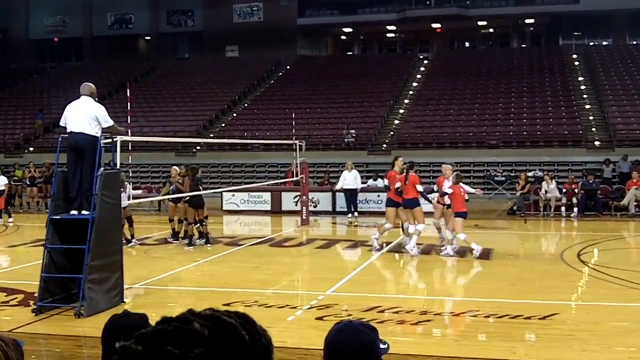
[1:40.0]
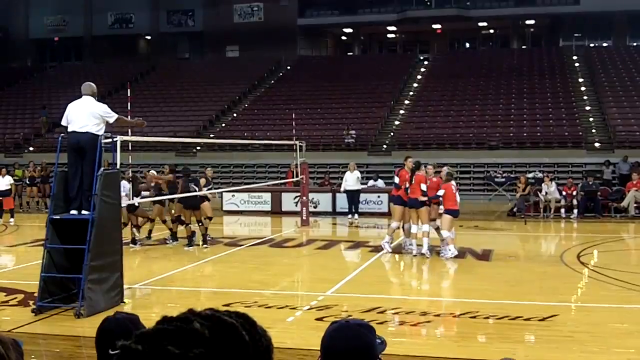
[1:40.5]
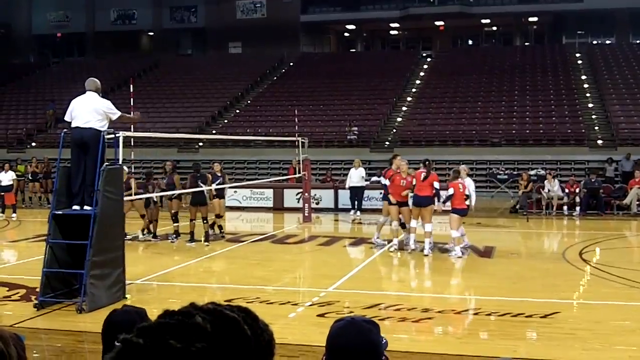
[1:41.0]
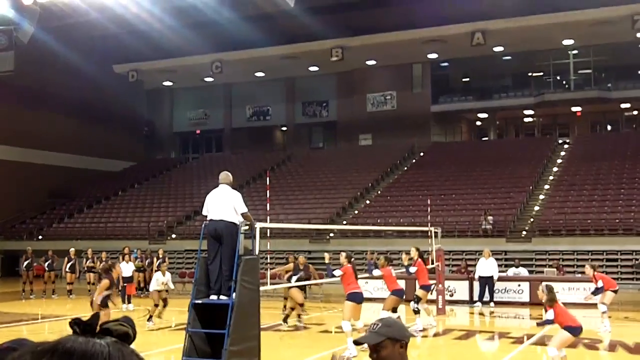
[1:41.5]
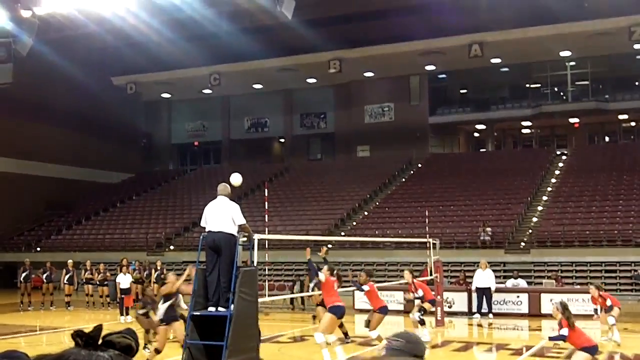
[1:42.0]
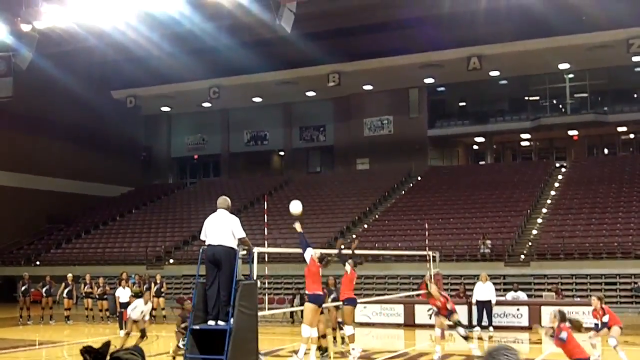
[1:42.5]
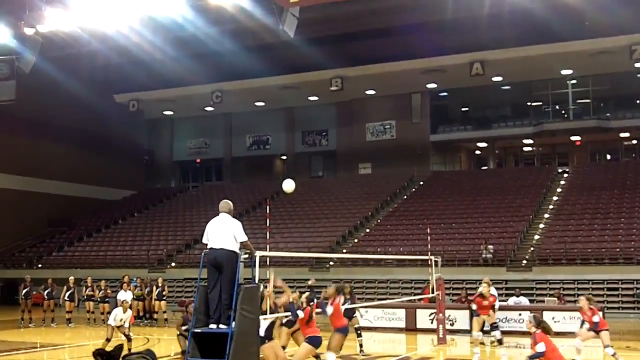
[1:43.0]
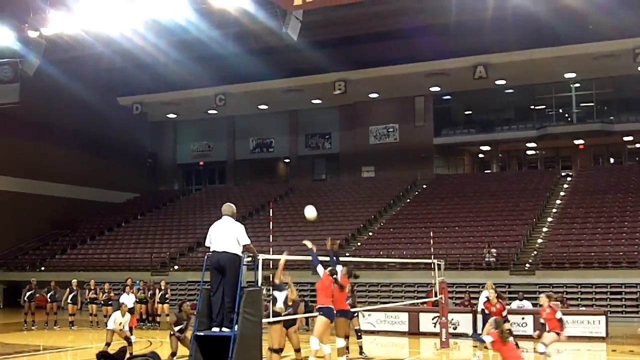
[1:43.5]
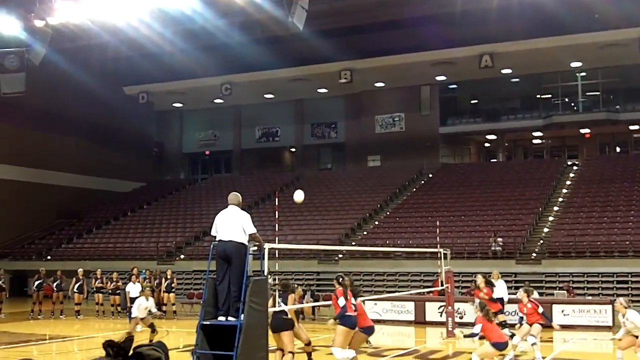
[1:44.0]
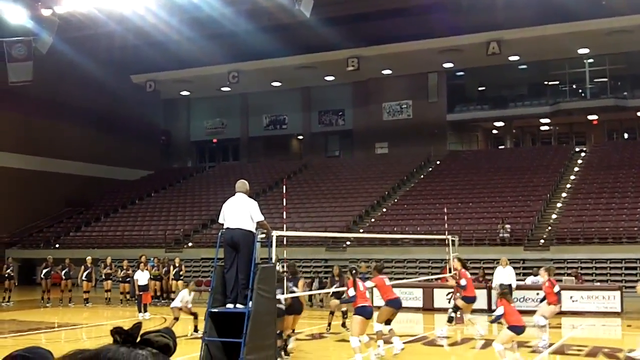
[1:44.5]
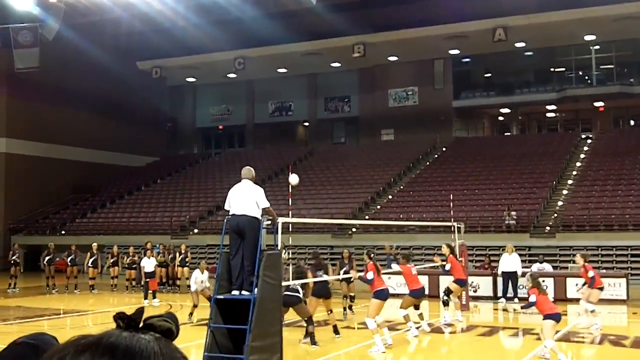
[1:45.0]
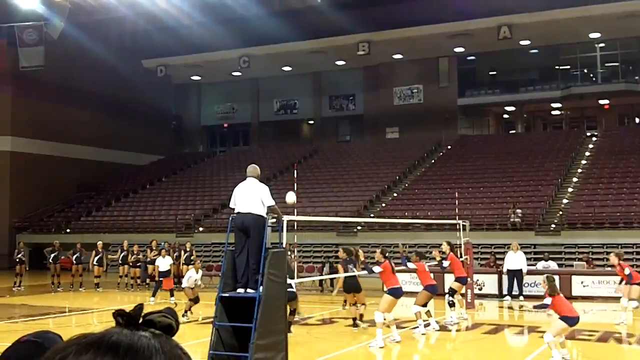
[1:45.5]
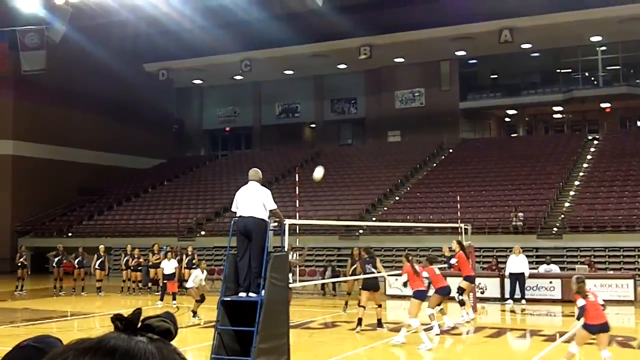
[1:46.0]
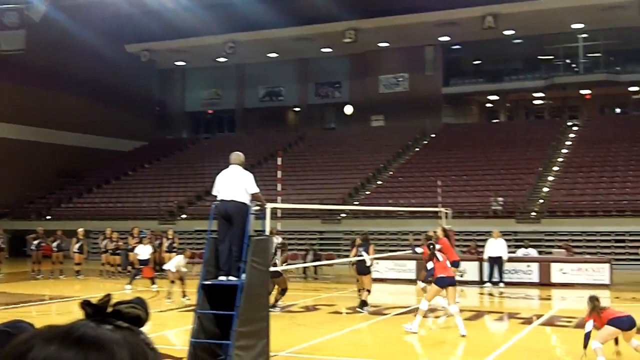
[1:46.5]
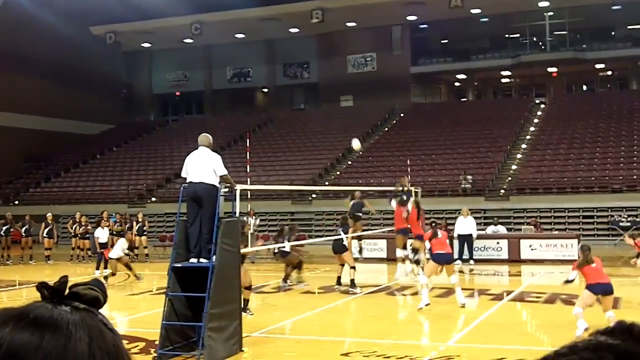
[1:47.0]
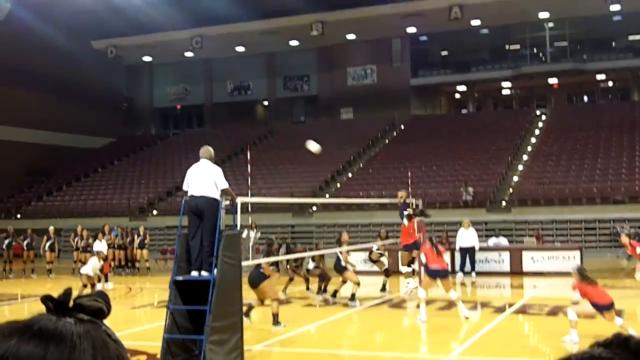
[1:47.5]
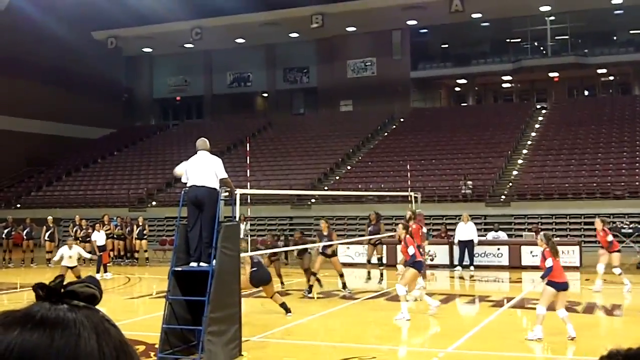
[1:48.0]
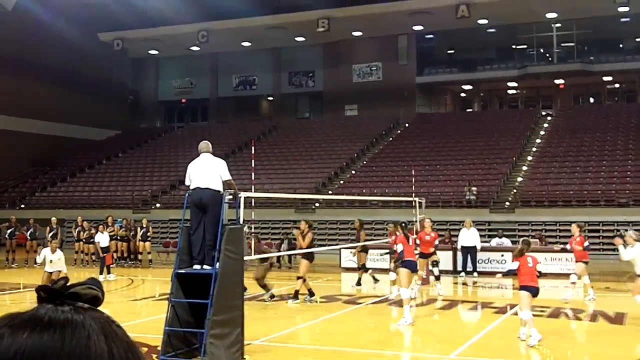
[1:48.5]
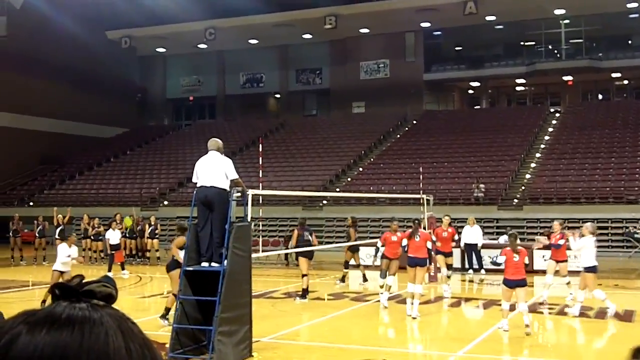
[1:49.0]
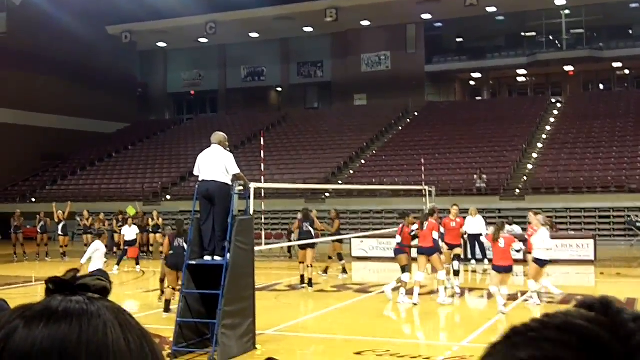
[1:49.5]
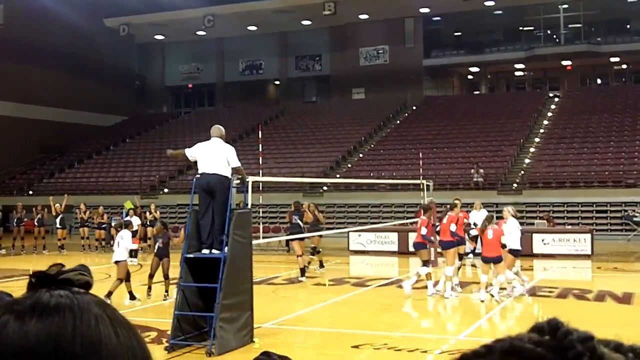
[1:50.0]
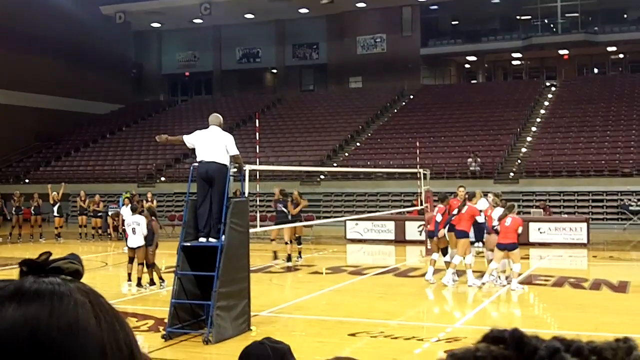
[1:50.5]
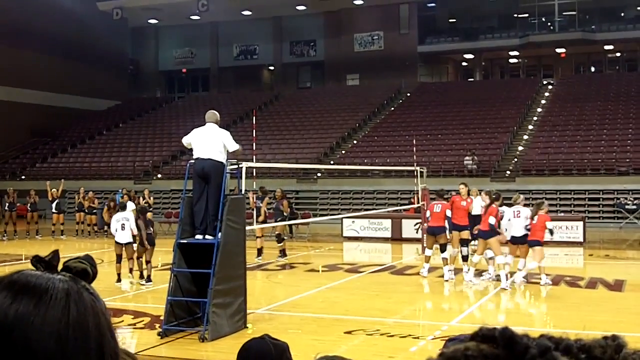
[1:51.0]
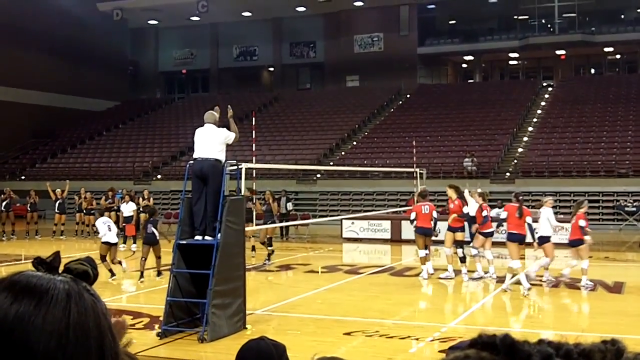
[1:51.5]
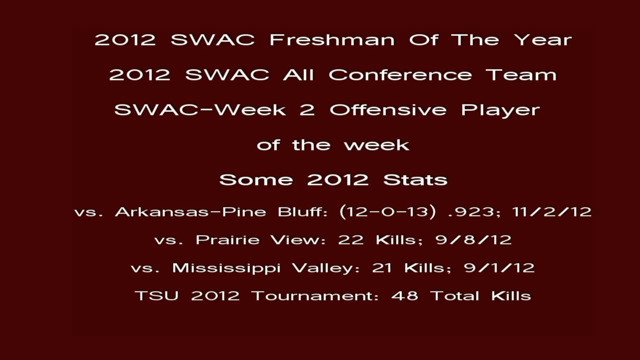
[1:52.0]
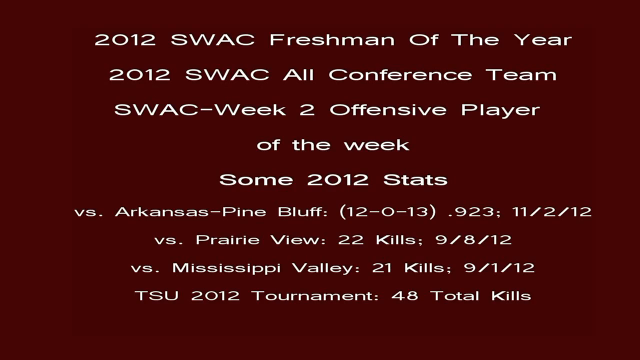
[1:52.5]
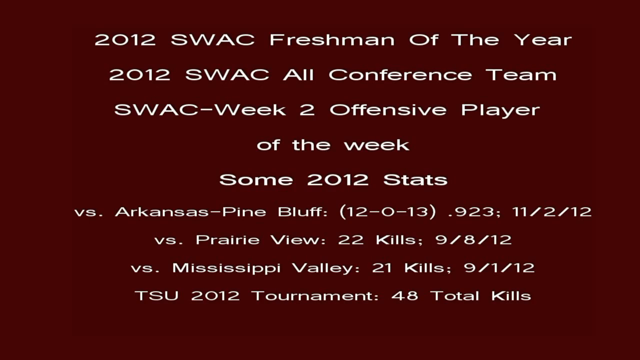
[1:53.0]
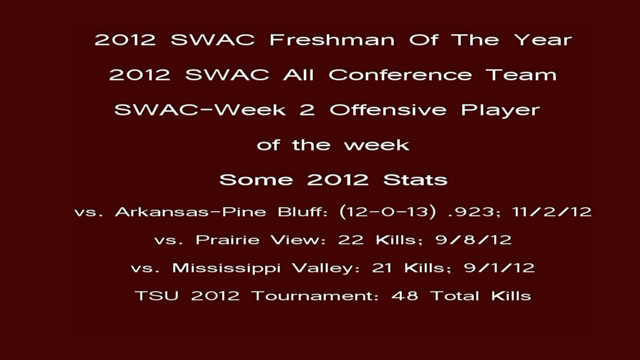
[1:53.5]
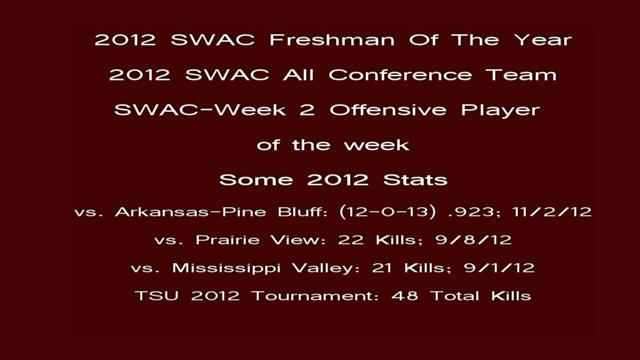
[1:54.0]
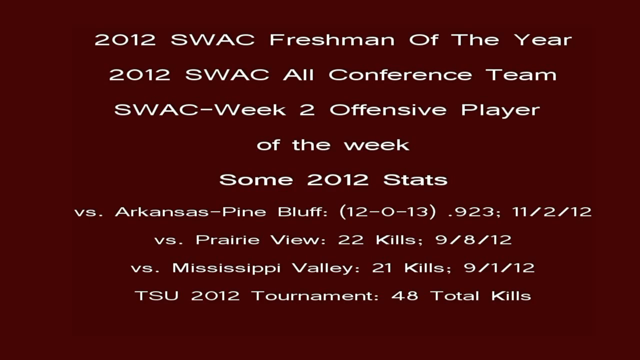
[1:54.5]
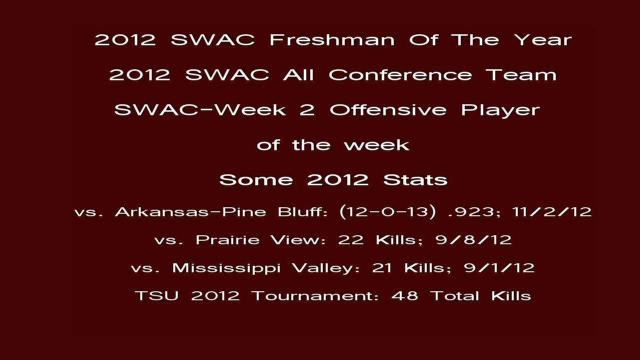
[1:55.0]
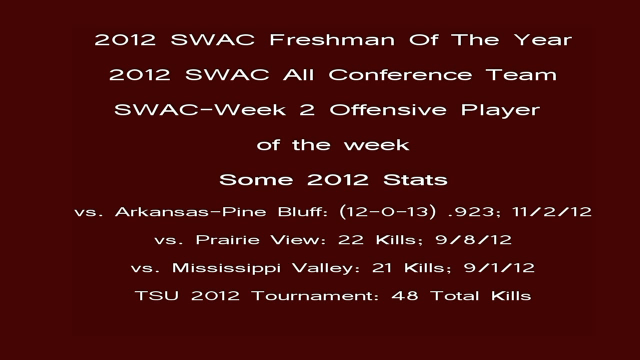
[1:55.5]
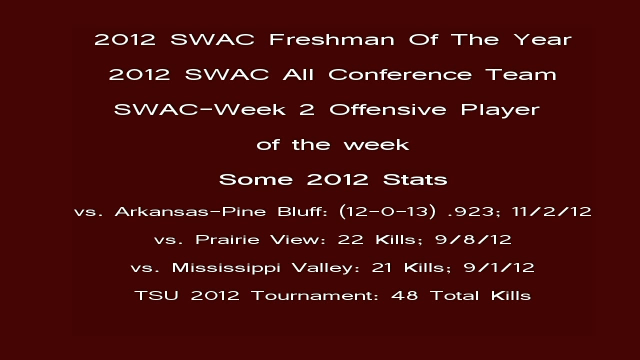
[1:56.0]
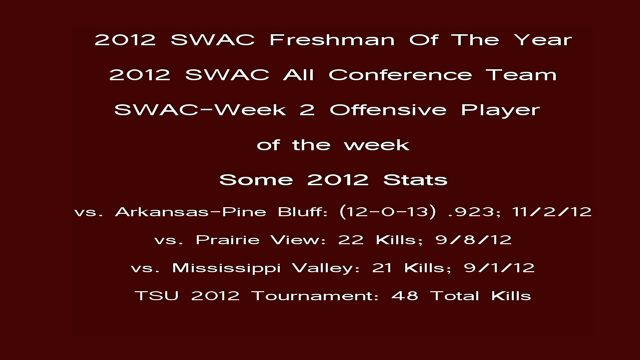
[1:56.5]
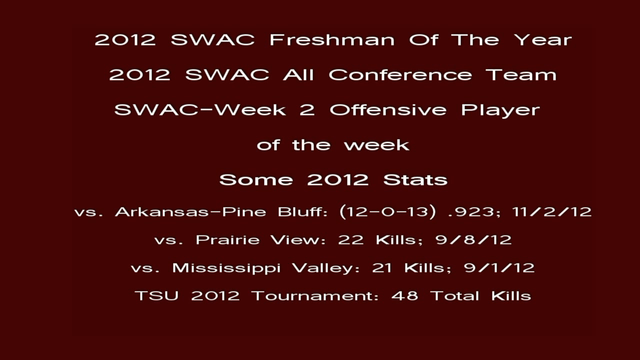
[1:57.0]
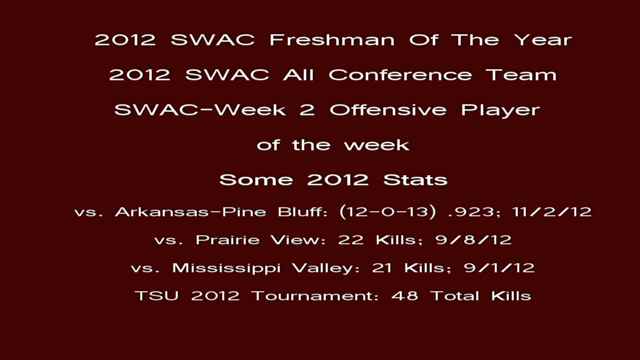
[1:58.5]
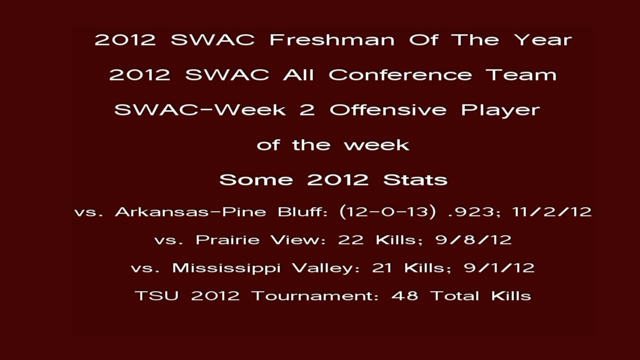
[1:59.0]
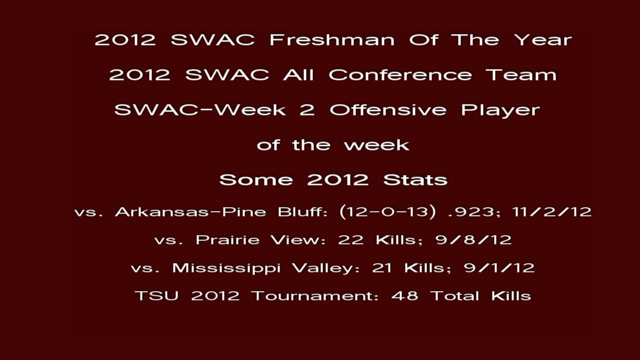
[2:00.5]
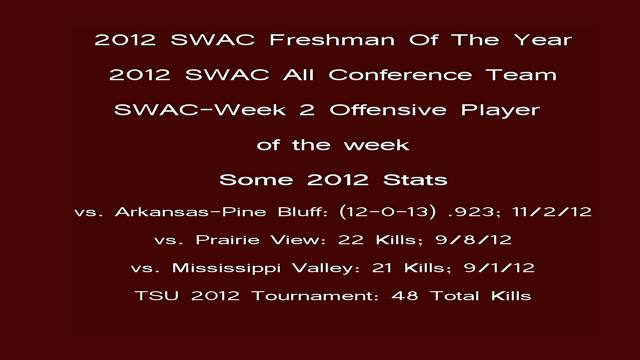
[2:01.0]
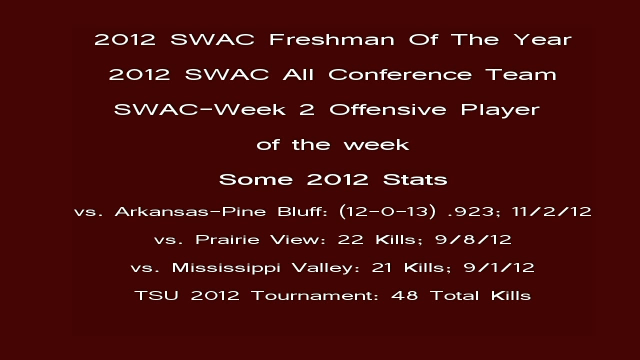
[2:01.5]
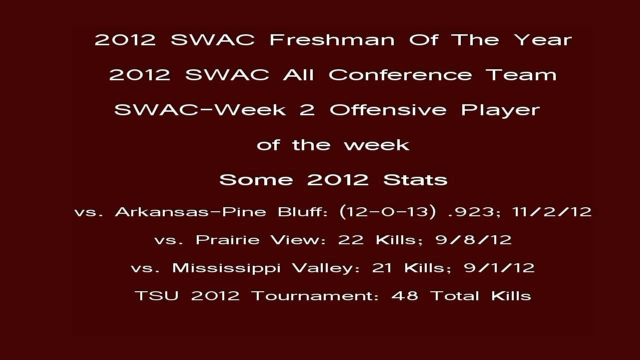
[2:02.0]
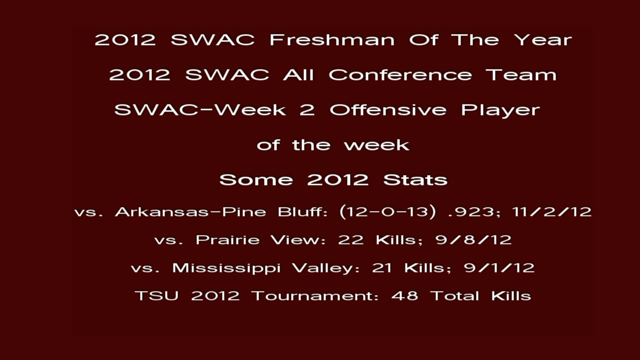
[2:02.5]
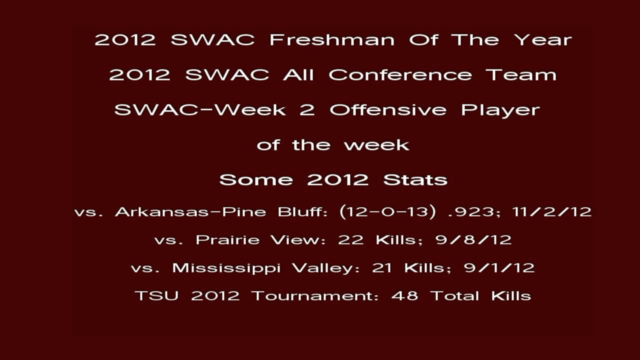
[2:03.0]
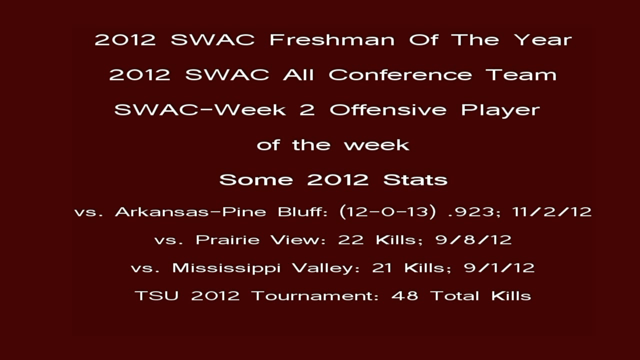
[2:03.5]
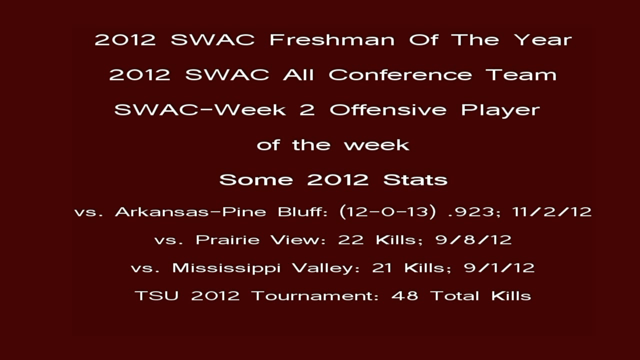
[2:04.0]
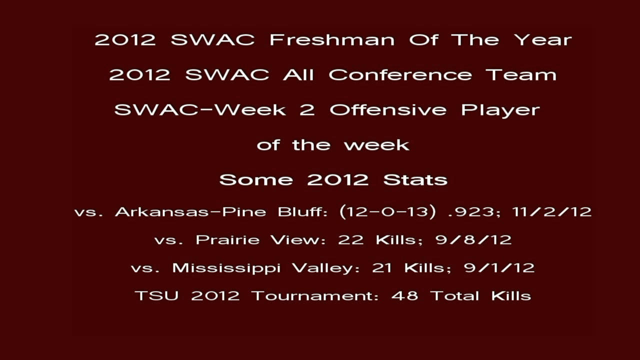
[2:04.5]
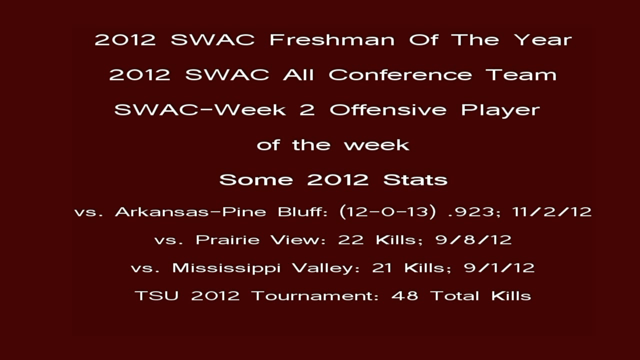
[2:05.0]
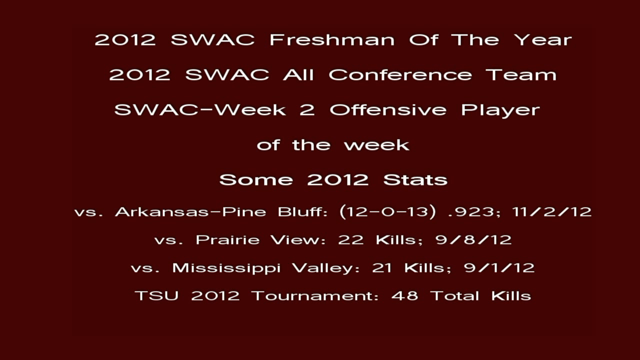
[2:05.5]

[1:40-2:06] A maroon screen shows a banner with stats: "2012 SWAC Freshman of the Year," "2012 SWAC All-Conference Team," "SWAC Week 2 Offensive Player of the Week," along with some 2012 stats and stats of certain teams. No teams are visible while the banner is shown. It reads "Robin Shannon, number 8 outside hitter, TSU 2 vs. UH 3," dated September 23rd. Then the college-level girls' volleyball game between the red-shirted team and the black-shirted team is shown, with servers wearing white long-sleeve shirts. The black team scores. A referee stands on a platform judging the game. The teams hit the ball back and forth again, and it looks like the black team scores again; the crowd gets up and cheers.